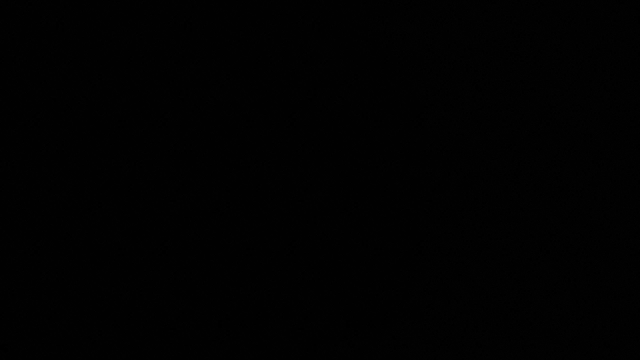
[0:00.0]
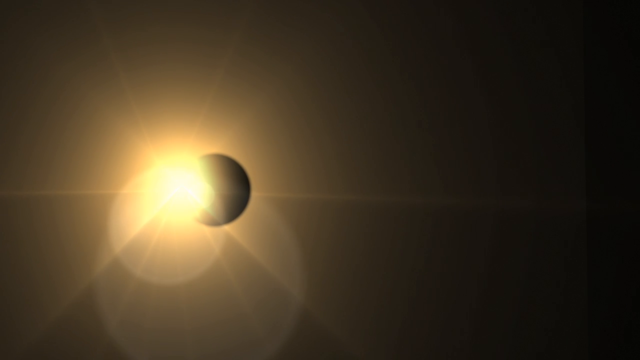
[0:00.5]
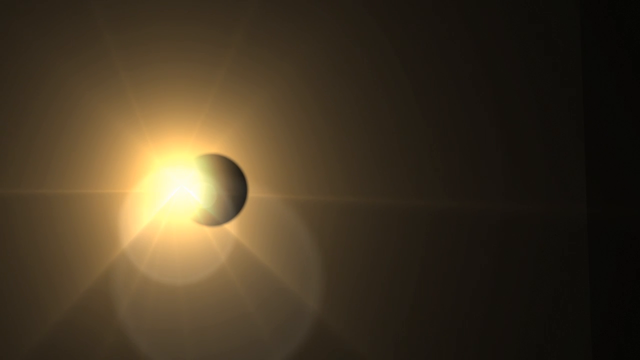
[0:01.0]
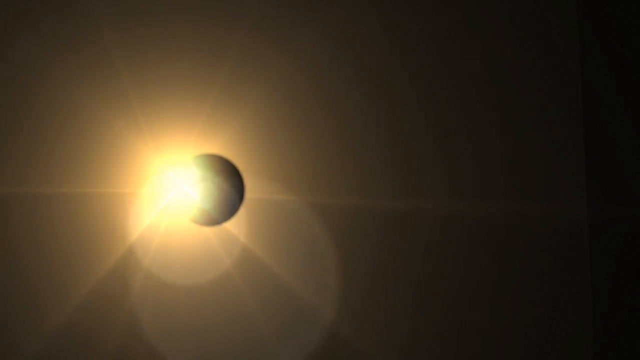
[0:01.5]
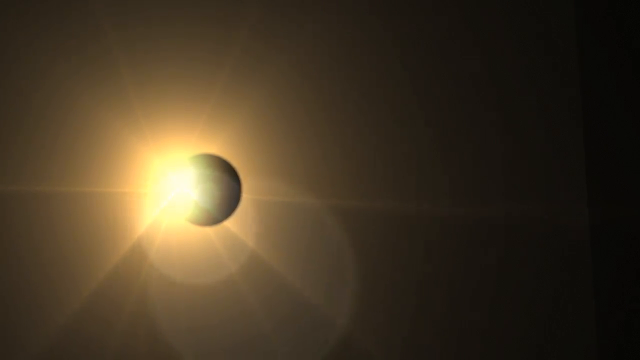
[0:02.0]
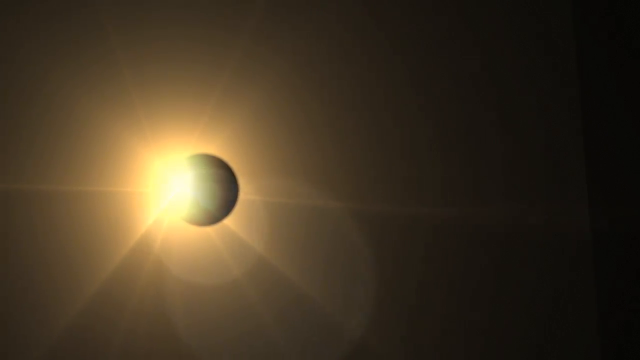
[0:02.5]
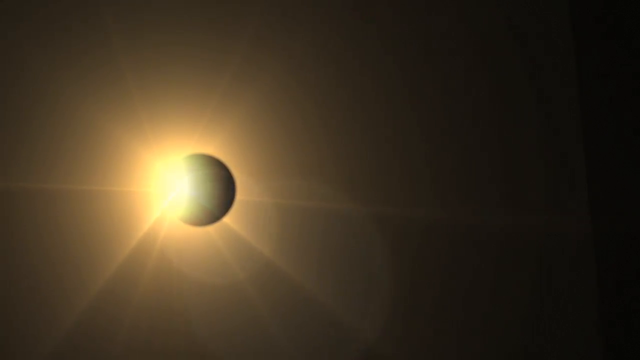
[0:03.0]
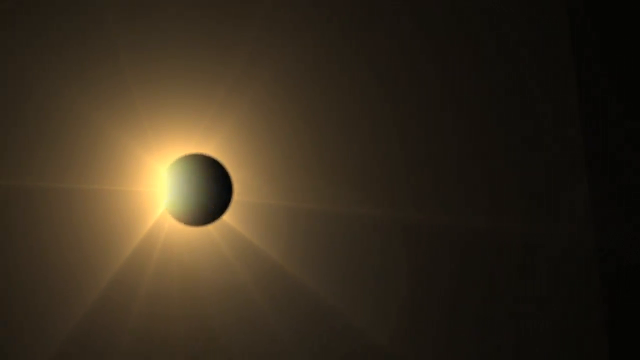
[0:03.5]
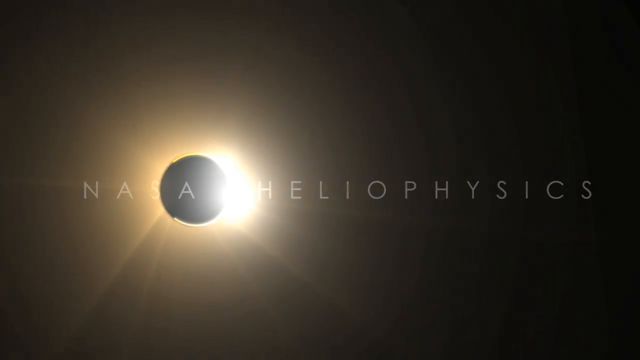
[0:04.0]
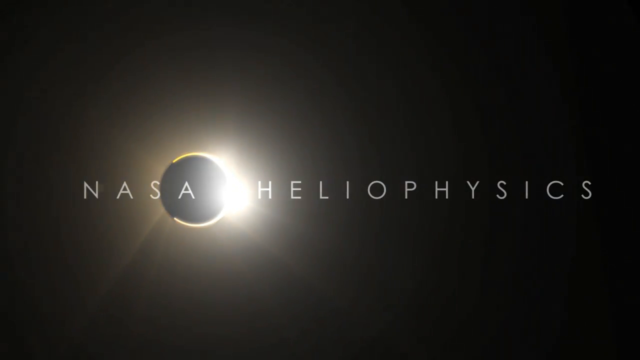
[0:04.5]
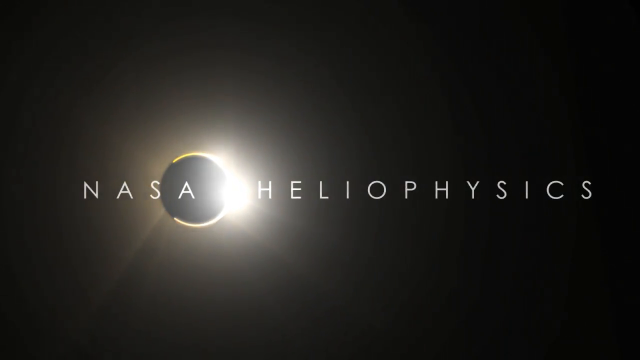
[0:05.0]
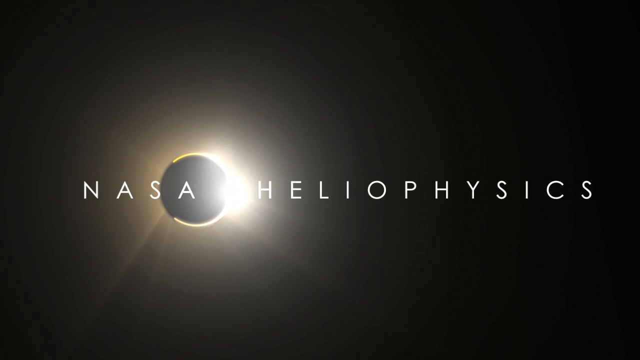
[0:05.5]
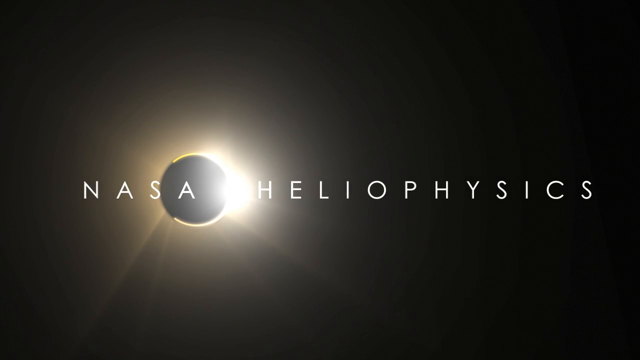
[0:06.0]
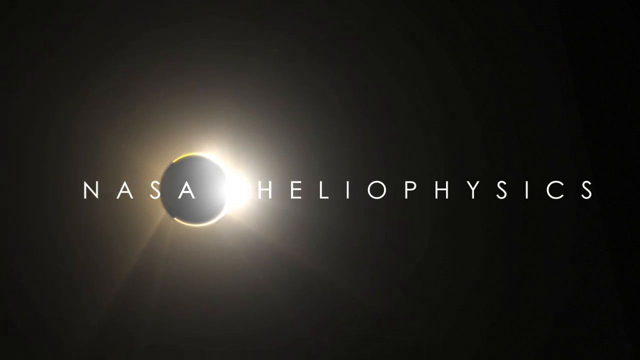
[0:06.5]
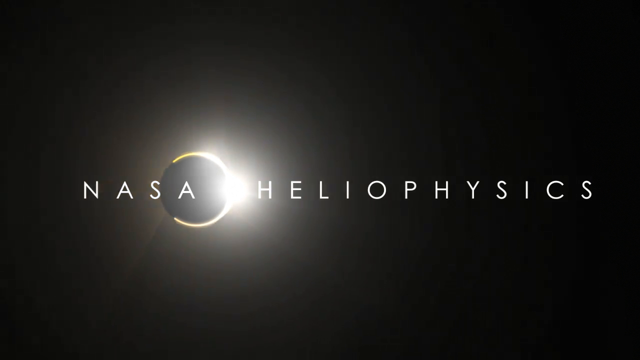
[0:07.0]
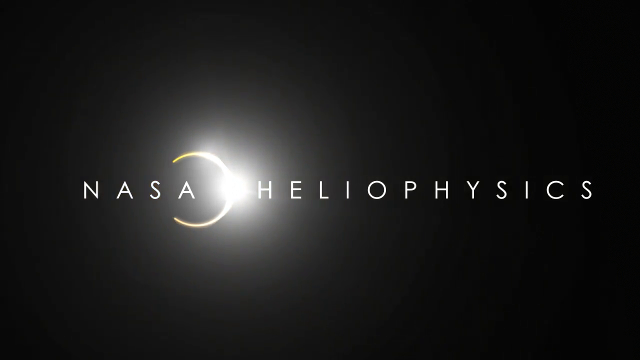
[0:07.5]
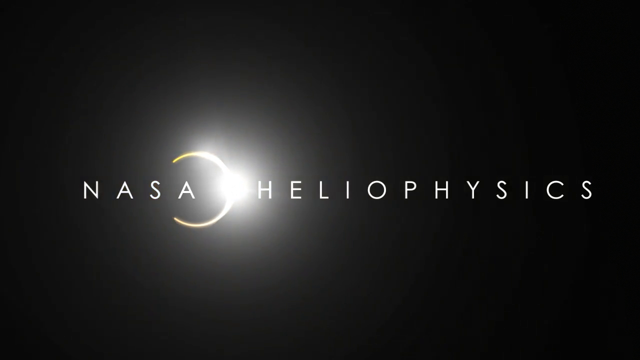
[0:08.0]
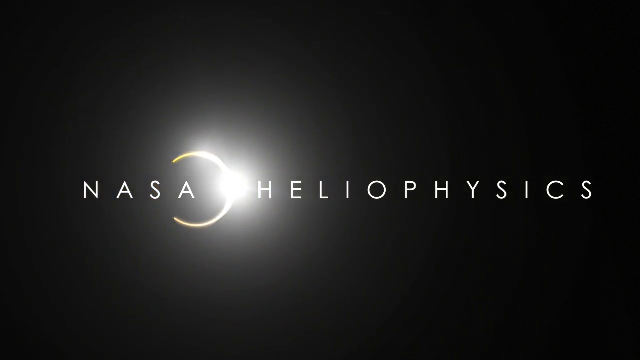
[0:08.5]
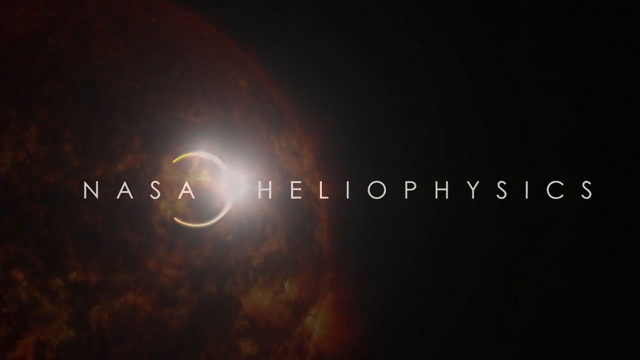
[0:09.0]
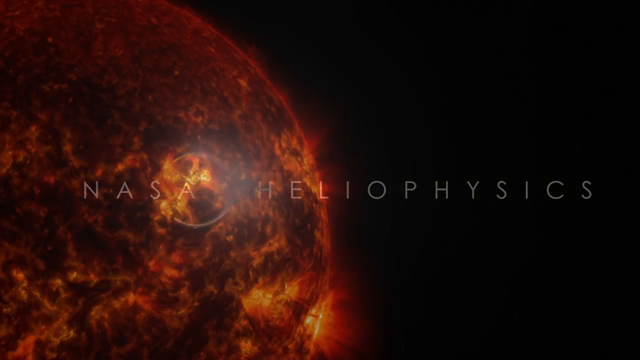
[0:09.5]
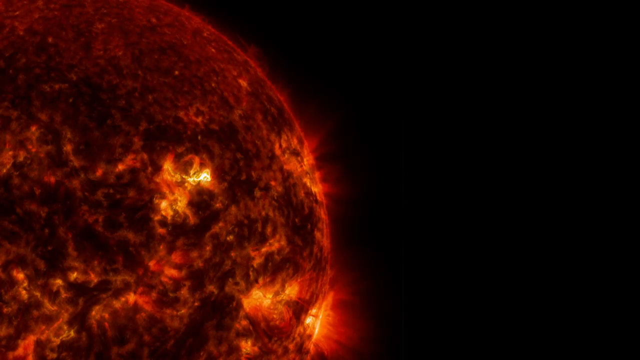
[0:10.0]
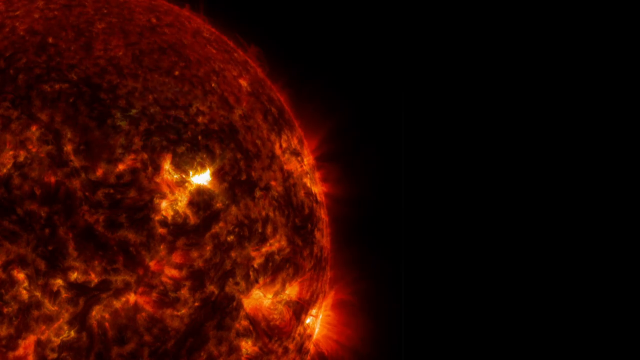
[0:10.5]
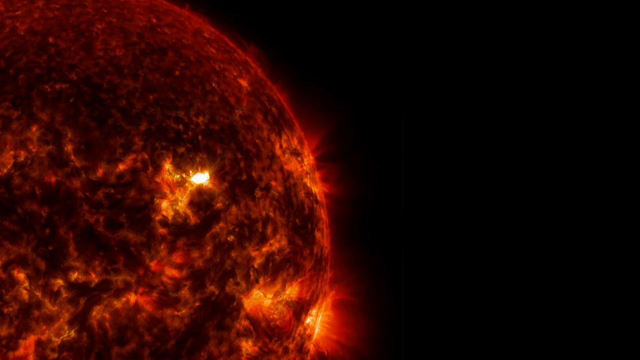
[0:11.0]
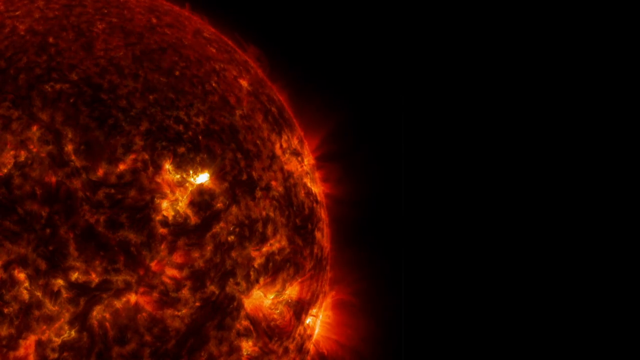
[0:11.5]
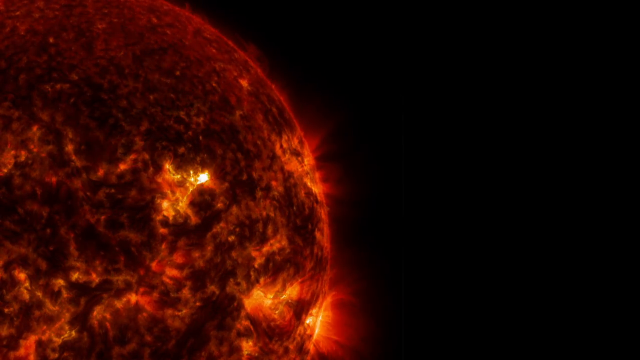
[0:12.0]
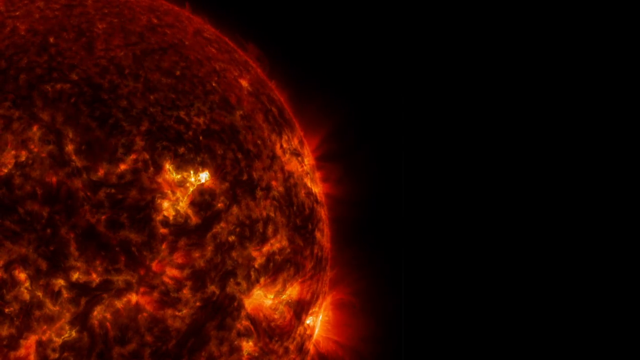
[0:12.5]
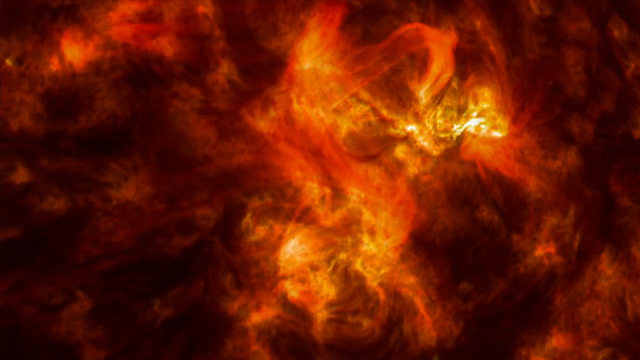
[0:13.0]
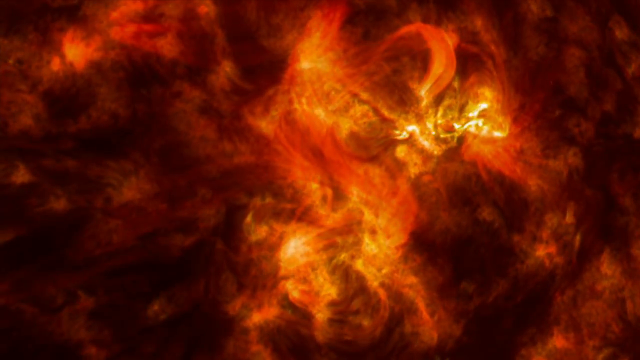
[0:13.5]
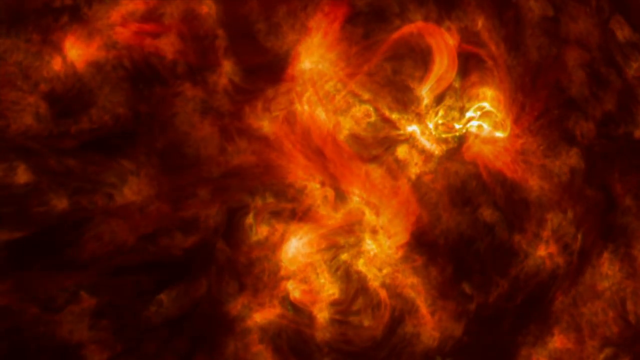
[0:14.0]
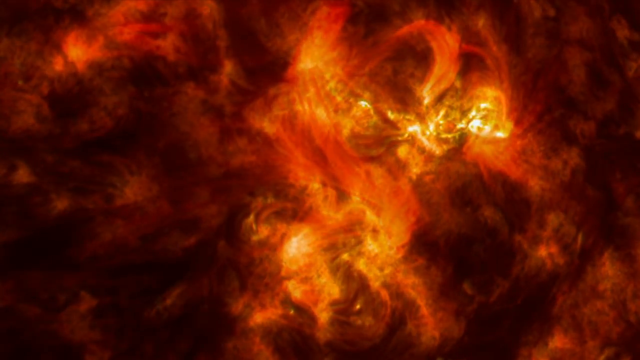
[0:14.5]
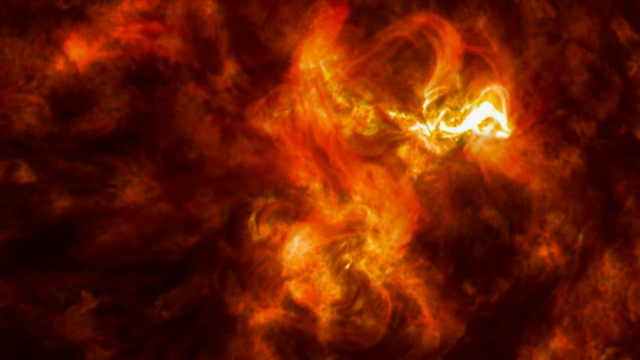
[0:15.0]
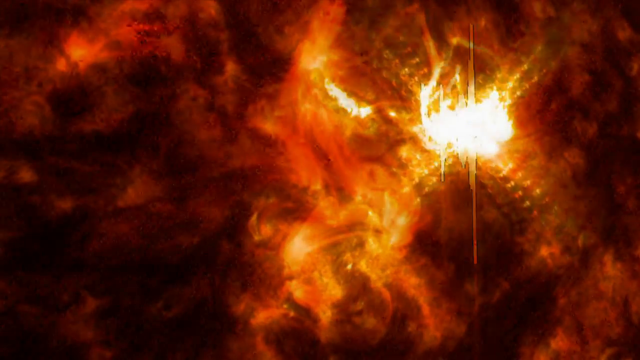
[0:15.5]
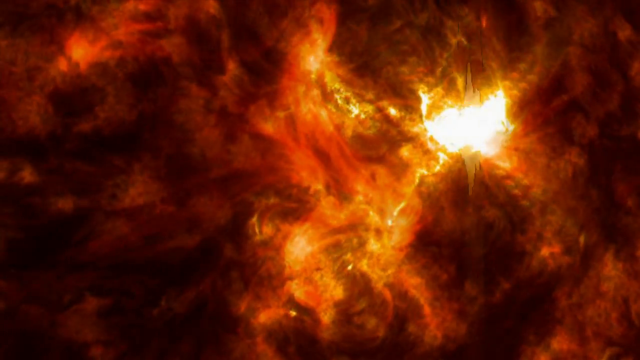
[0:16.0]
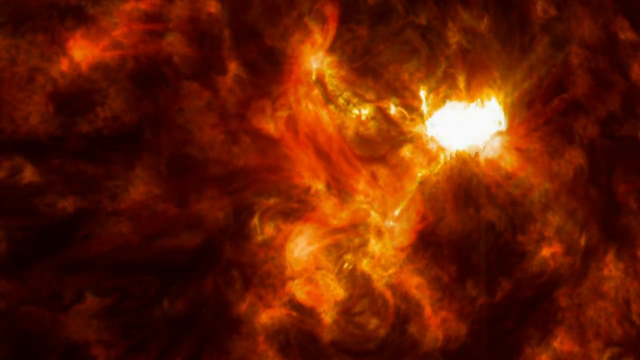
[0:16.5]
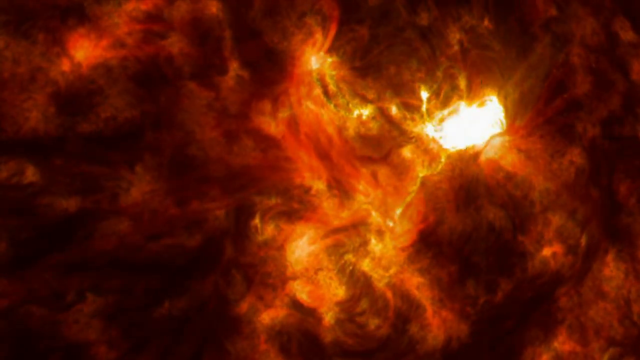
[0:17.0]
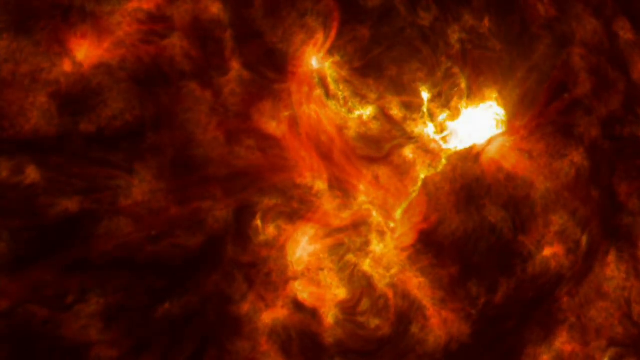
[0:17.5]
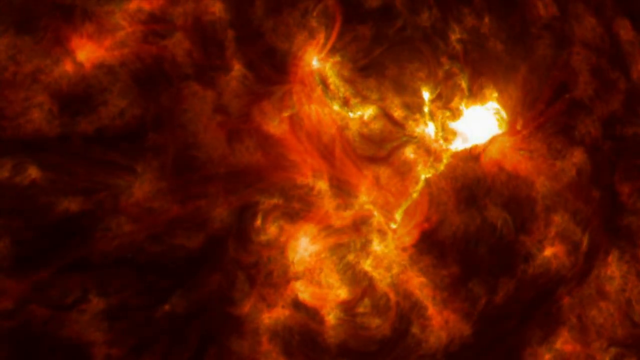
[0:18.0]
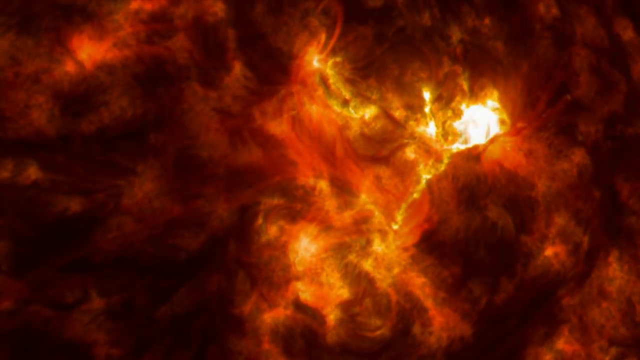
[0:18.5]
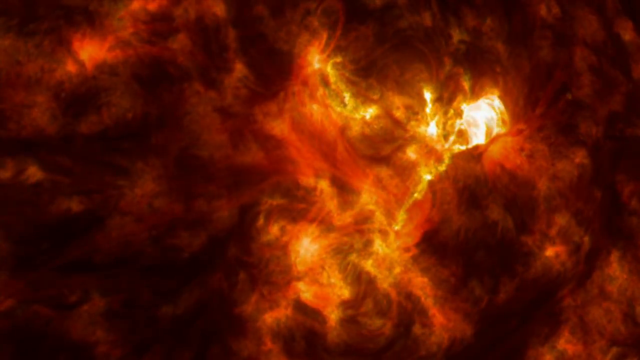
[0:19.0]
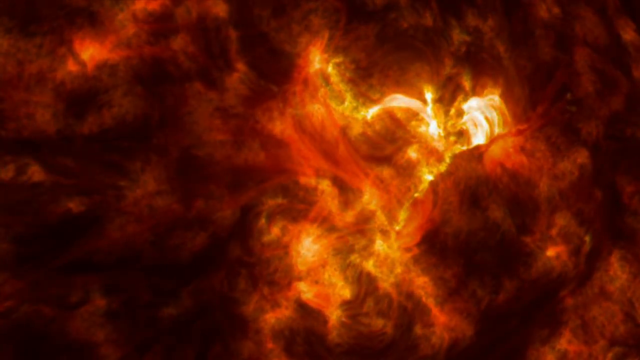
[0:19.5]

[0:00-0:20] The video opens on what appears to be a solar eclipse, with the moon slowly passing across the Sun and a sliver of sunlight visible around the moon. A lens flare appears as the eclipse happens, and the text "NASA HELIOPHYSICS" shows in white letters on the screen. The text then fades to reveal a shot of the Sun. In this shot the edge of the Sun is very bright red, with some flares, against a black sky of empty space with no stars. A close-up of the Sun follows, showing solar flares; the Sun is very orange, with many shades of orange, black and yellow, and bright white fires flashing around it. The Sun is moving, shooting off flares, with many little fires on its surface. One major flare flickers and makes a flash of white light, and it flickers again with a flash of white light in the close-up. The imagery might be computer-generated. The surface appears to ripple as the atmospheric conditions move constantly, and the Sun looks very bright and colorful, with many dark patches.